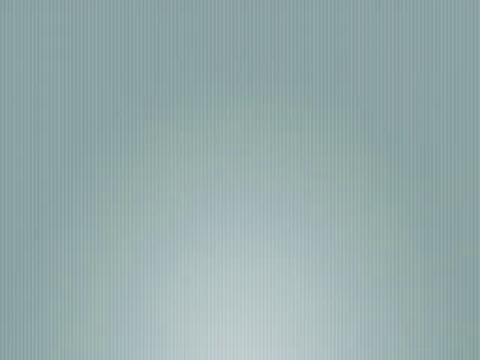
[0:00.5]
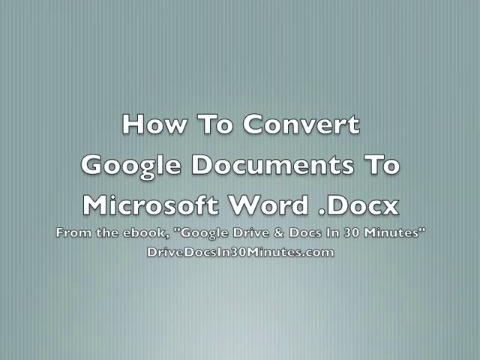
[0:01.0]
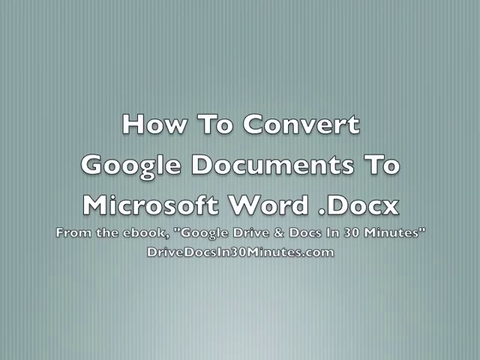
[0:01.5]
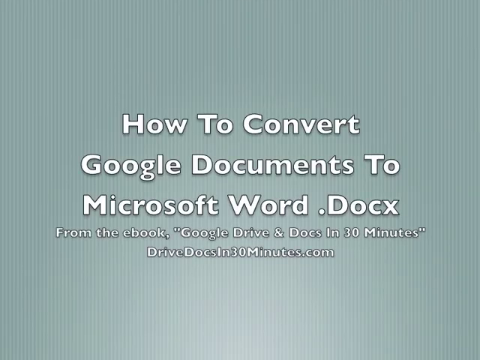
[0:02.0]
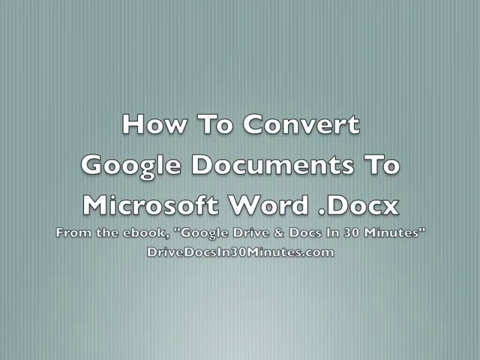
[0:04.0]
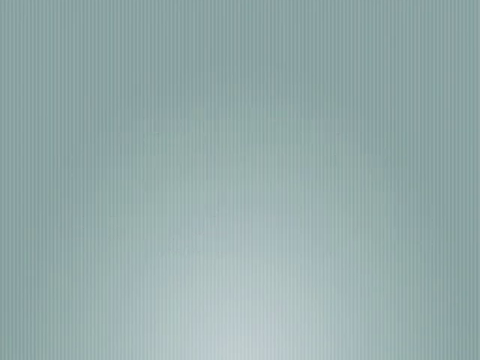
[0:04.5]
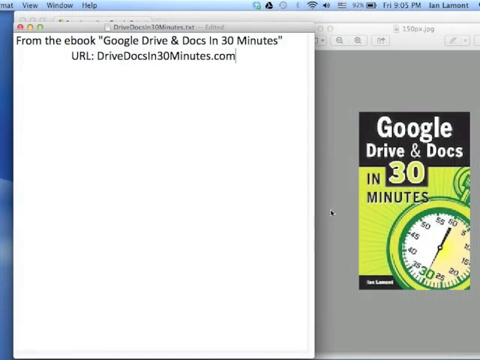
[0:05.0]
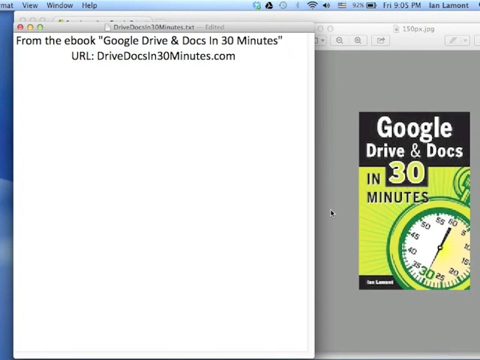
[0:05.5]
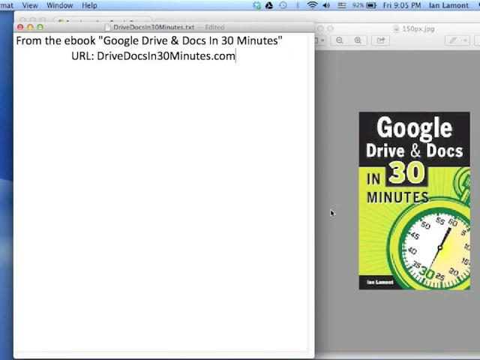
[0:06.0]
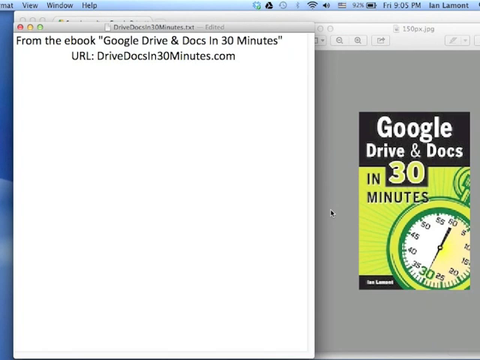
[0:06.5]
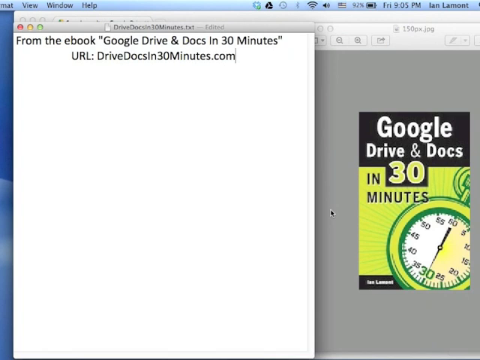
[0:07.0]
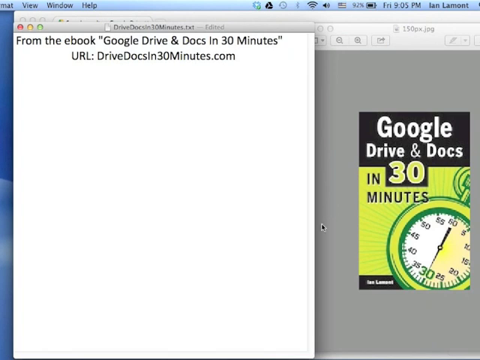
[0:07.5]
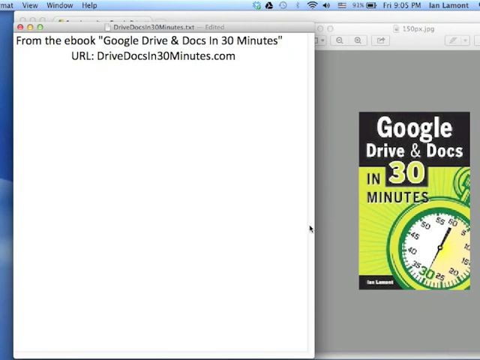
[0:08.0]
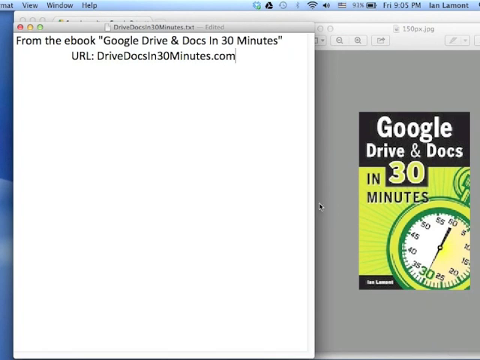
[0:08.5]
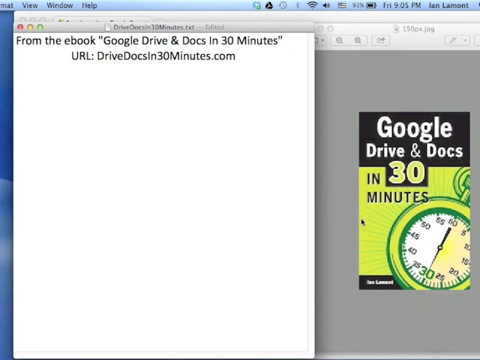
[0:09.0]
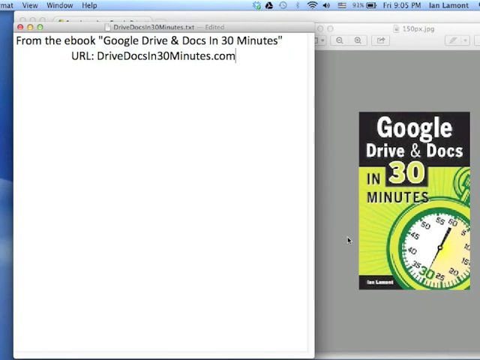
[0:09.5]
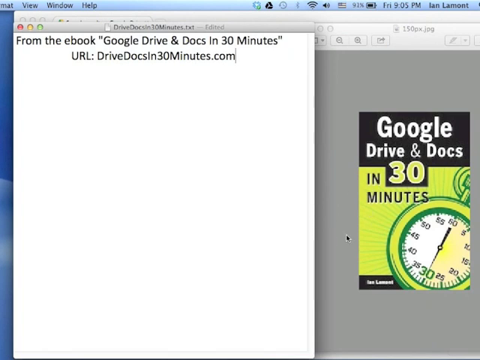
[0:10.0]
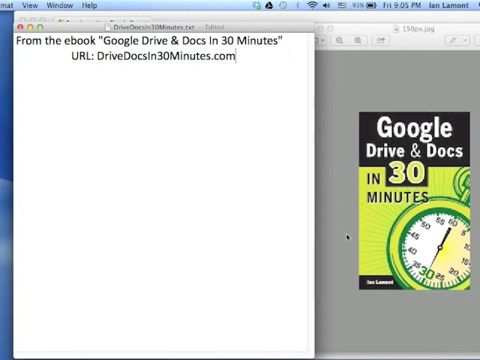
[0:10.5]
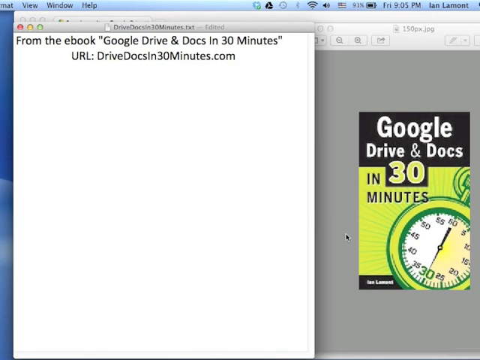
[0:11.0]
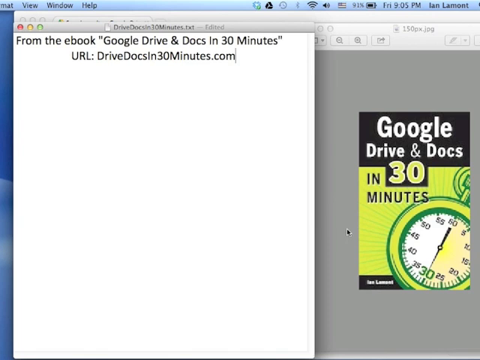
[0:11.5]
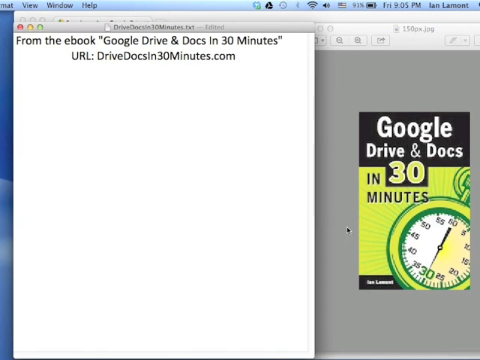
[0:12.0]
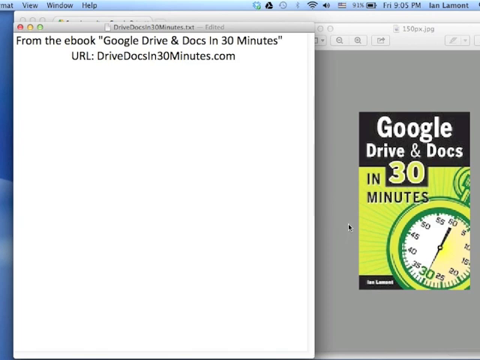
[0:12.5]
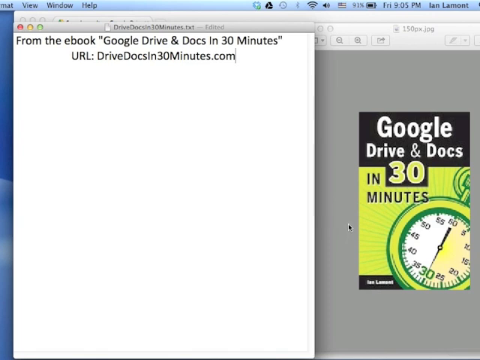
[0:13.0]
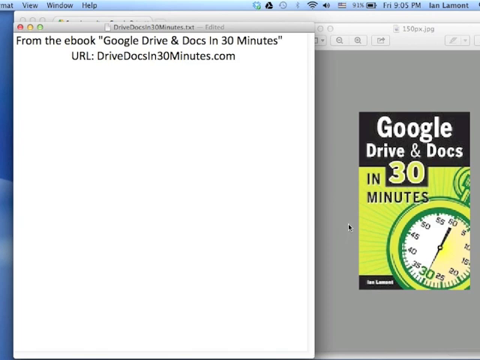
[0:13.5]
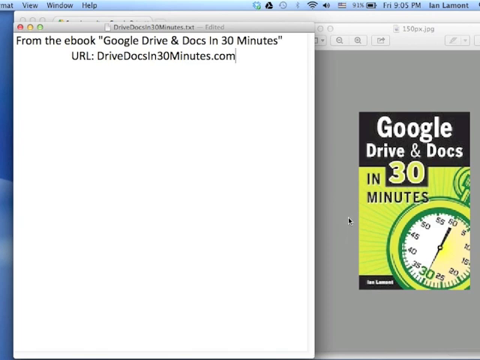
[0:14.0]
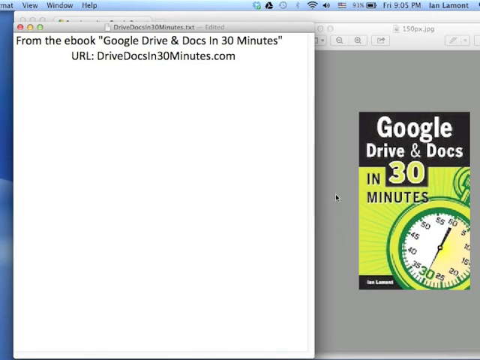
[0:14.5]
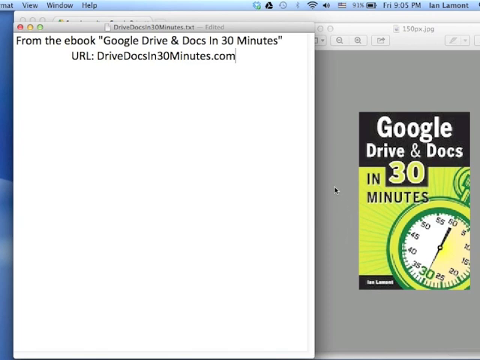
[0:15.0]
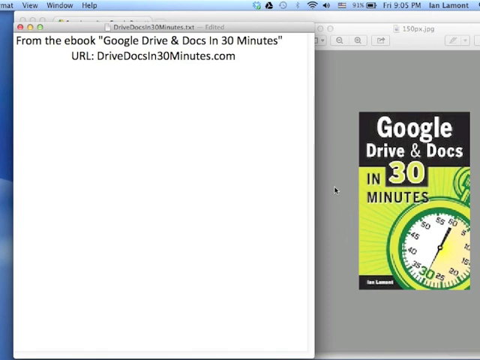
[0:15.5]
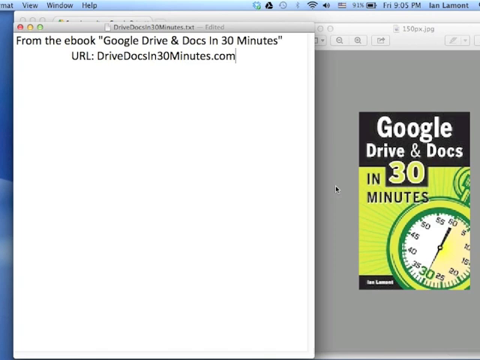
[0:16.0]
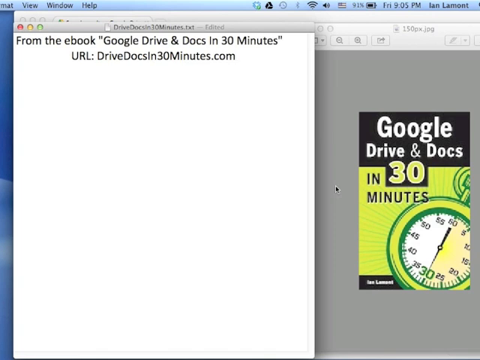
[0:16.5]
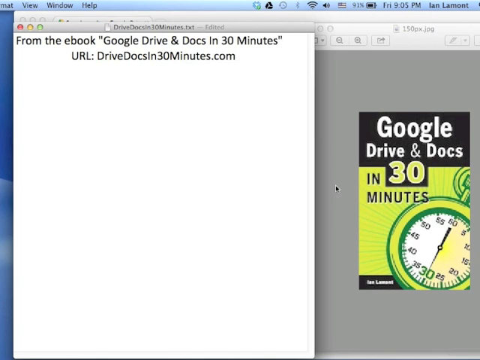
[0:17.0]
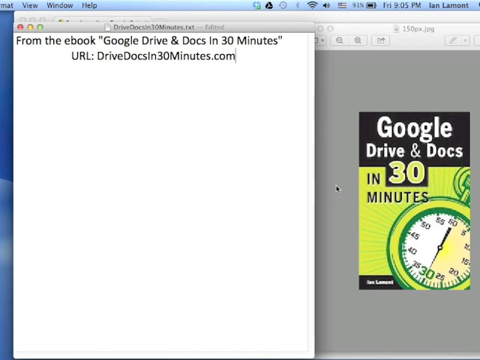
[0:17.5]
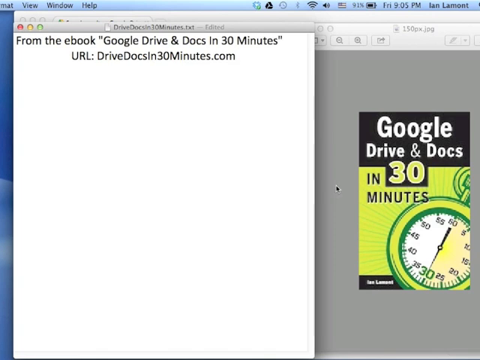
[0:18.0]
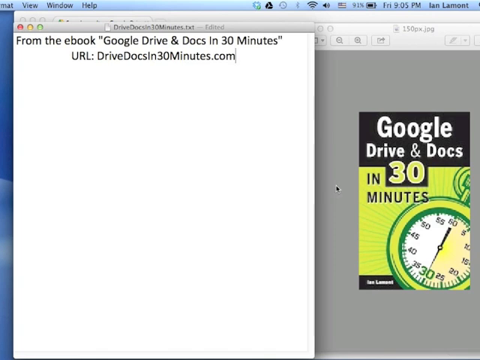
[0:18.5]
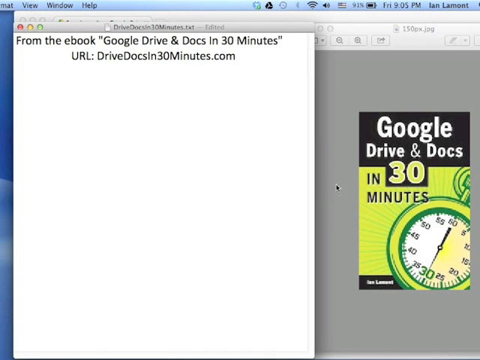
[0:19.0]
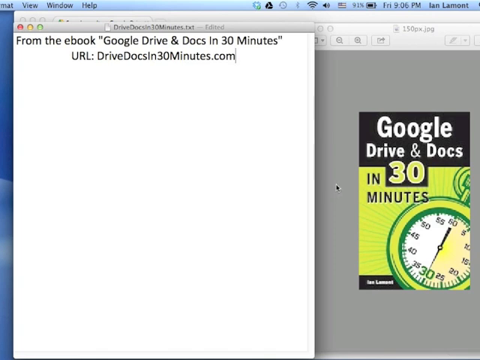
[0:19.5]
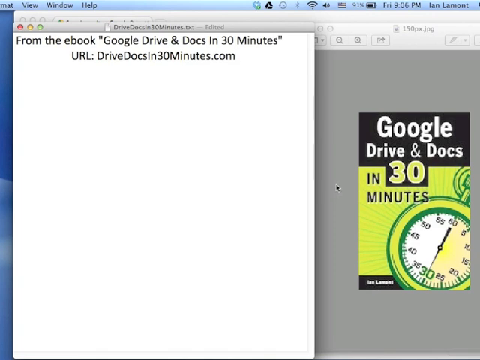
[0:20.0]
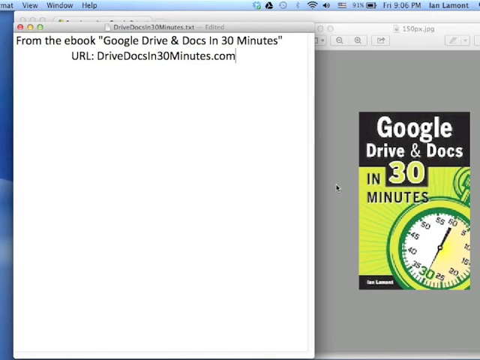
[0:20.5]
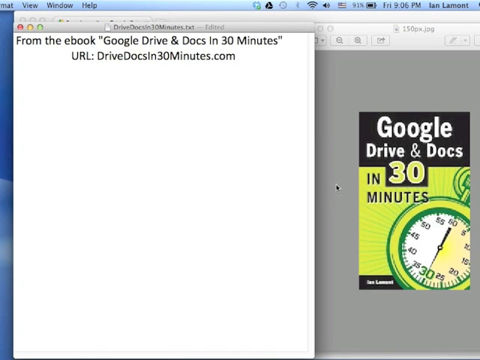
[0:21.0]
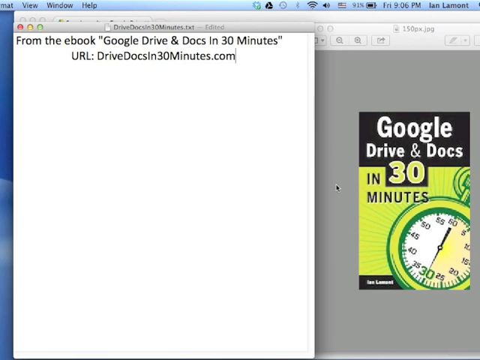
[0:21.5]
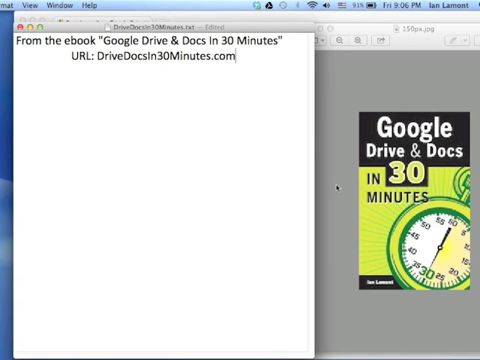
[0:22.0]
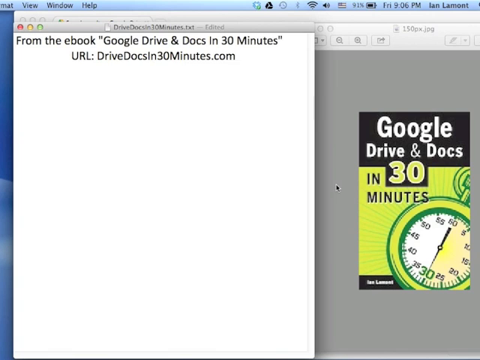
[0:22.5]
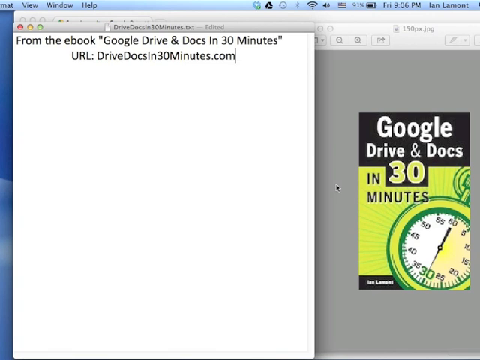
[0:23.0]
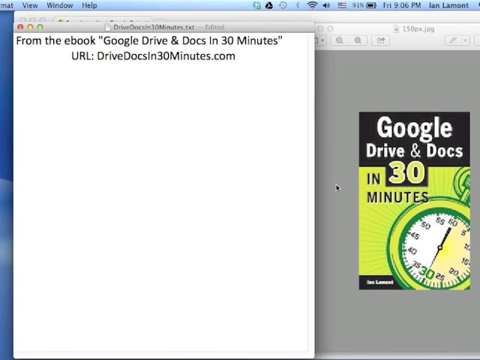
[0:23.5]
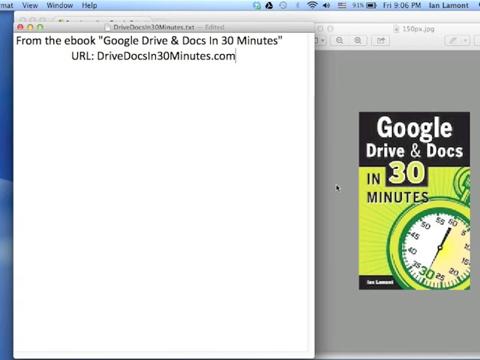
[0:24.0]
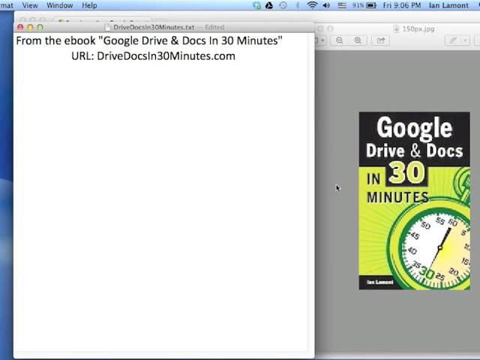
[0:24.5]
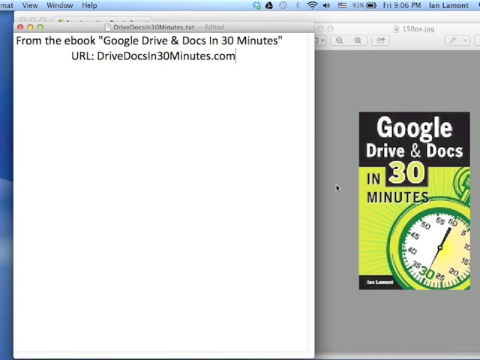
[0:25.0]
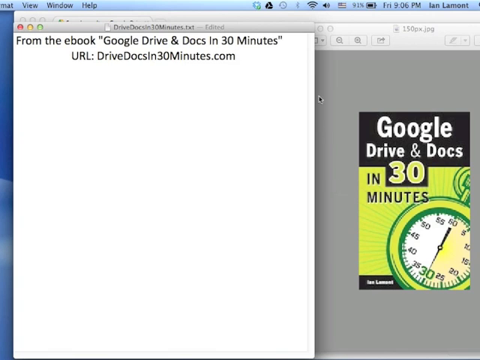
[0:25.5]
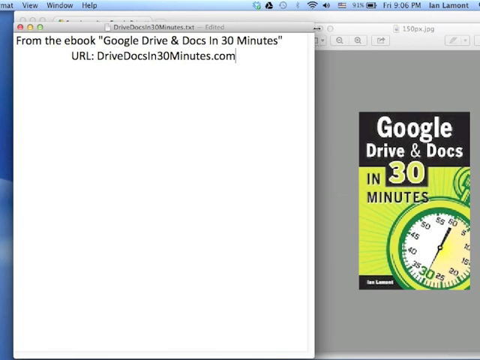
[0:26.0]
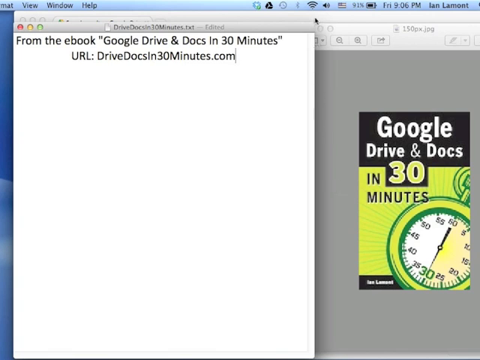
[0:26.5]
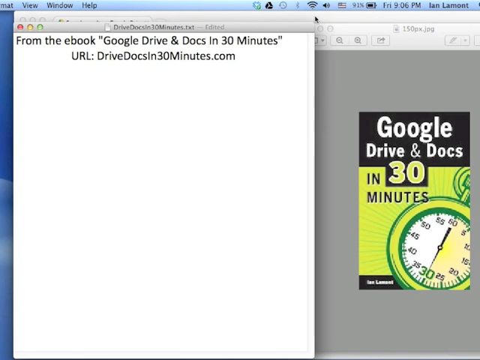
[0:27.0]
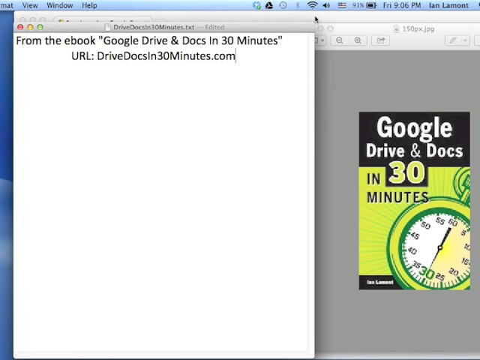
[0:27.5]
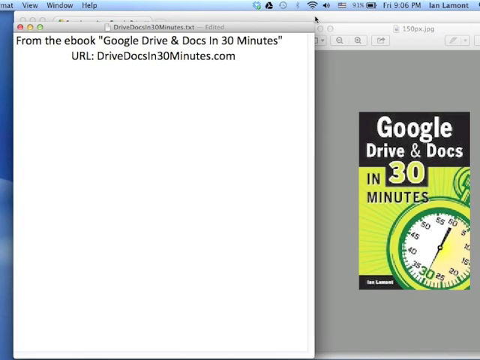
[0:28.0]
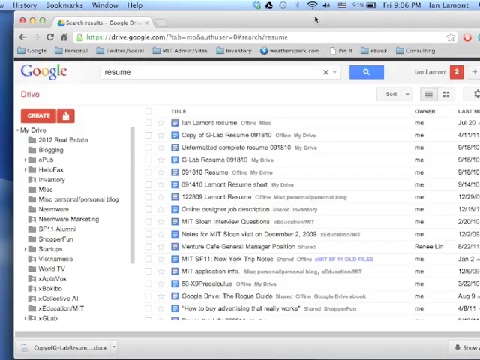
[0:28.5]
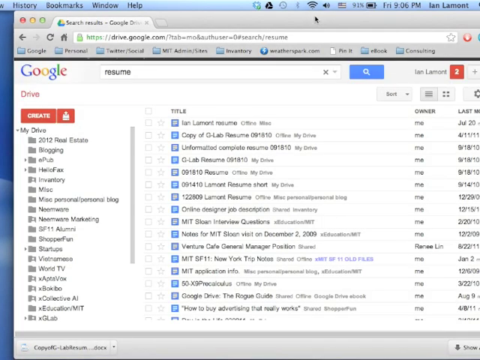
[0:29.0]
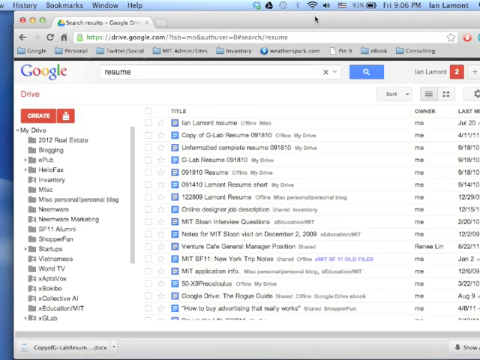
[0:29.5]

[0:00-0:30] The video opens on a screen with a green background displaying white text: "how to convert Google documents to Microsoft Word DOCX from the e-book Google Drive and Docs in 30 Minutes drivedocsin30minutes.com". The screen then changes. On the right is a picture that says "Google Drive and Docs in 30 minutes"; it shows what appears to be a watch, with "30" written large and bold and other numbers from 5 to 60, in black and green. On the left is the text "from the e-book Google Drive and Docs in 30 minutes" with the URL drivedocsin30minutes.com. An arrow moves around as someone navigates on a computer, and the top of the frame shows that this is a computer screen.